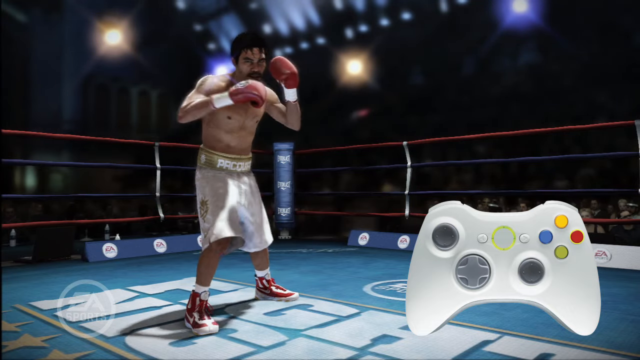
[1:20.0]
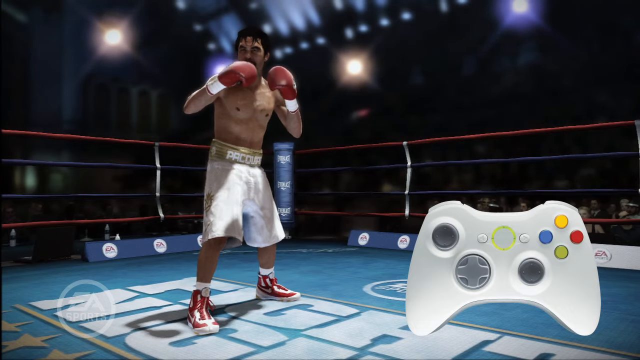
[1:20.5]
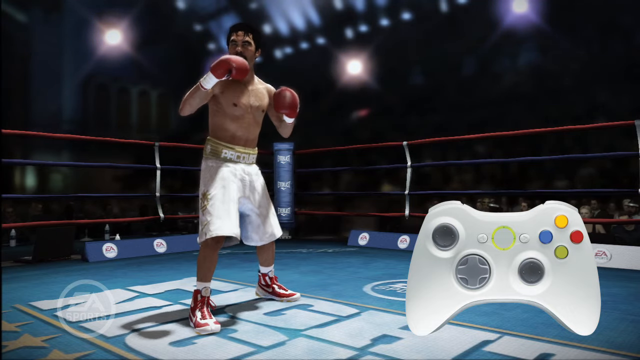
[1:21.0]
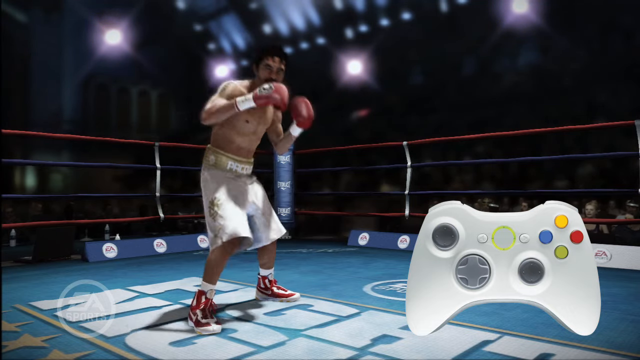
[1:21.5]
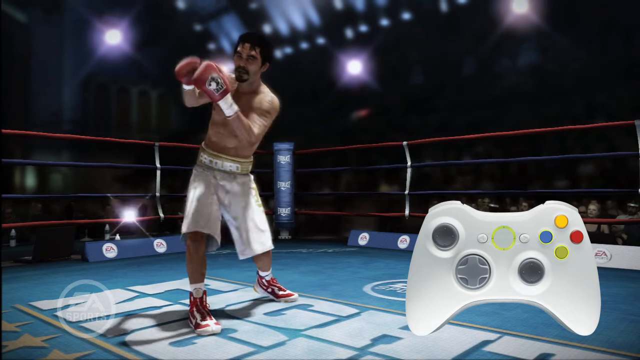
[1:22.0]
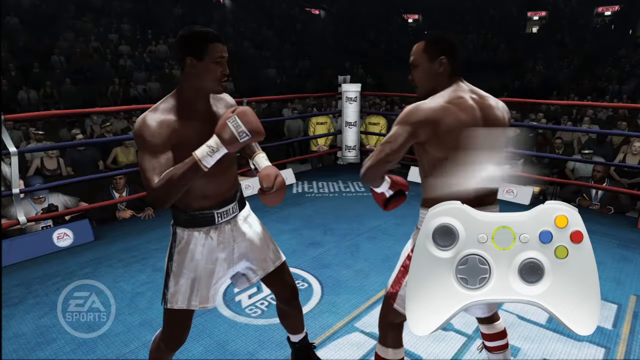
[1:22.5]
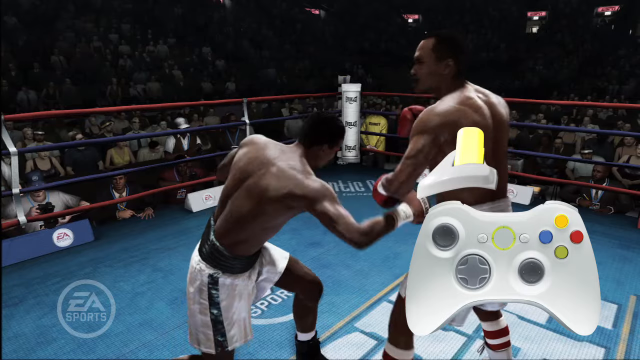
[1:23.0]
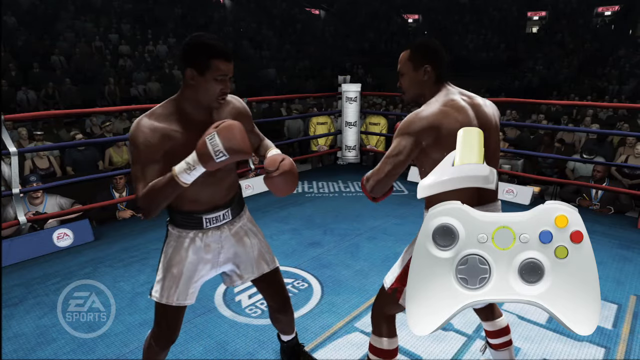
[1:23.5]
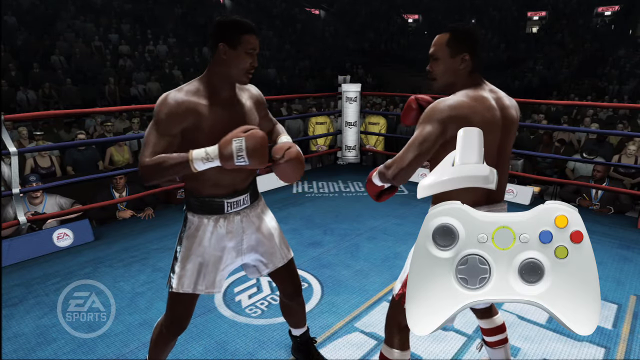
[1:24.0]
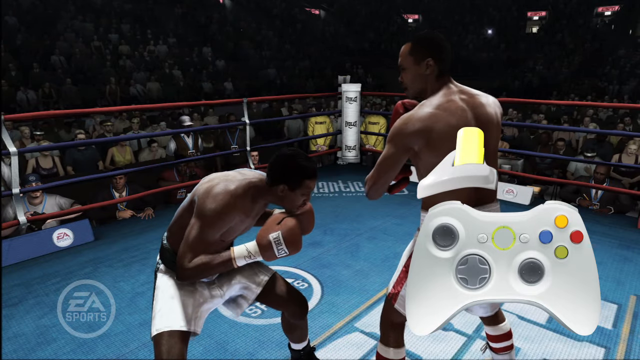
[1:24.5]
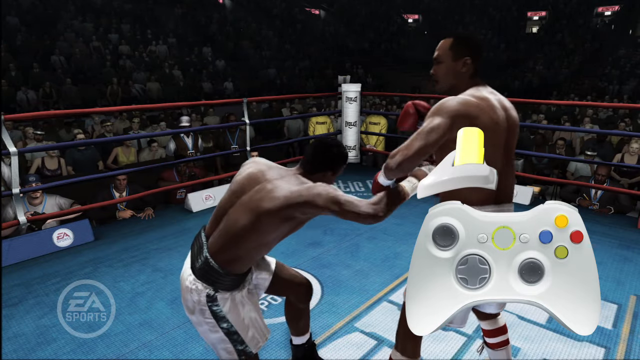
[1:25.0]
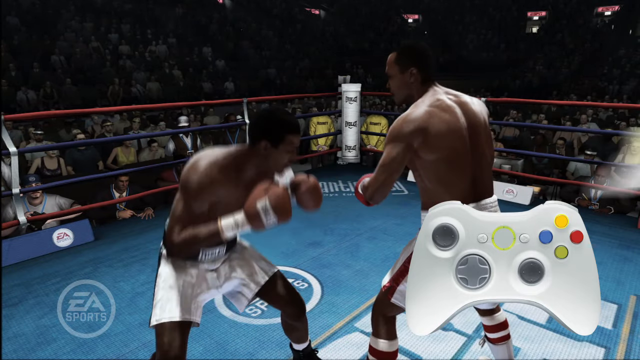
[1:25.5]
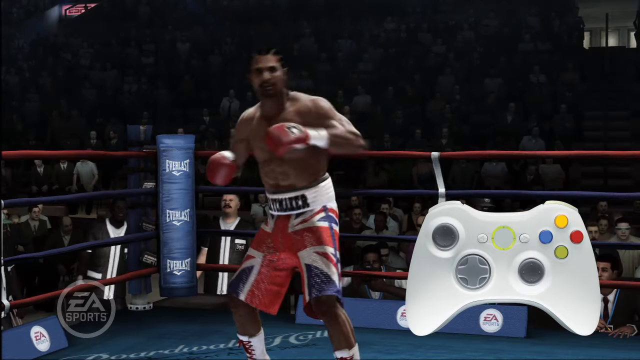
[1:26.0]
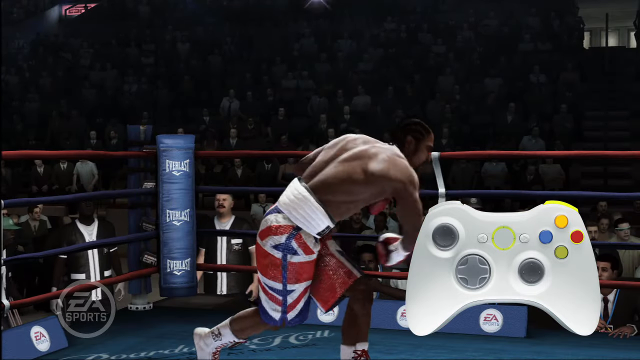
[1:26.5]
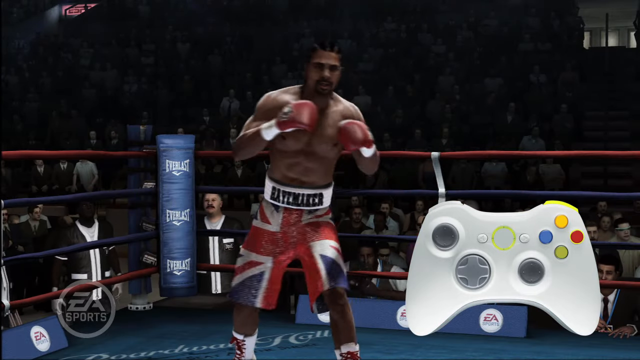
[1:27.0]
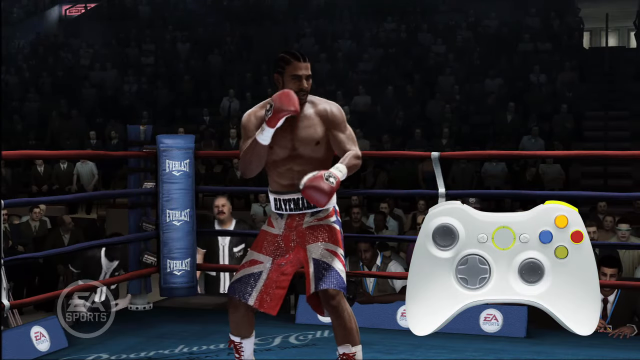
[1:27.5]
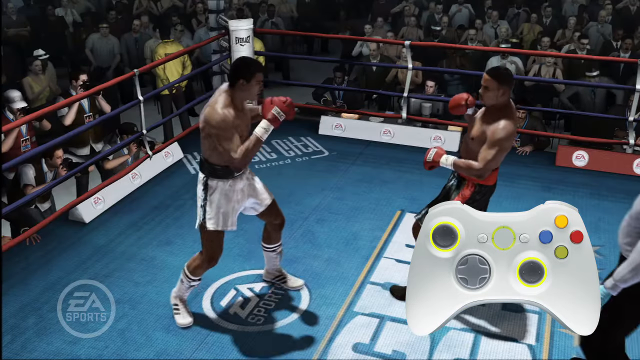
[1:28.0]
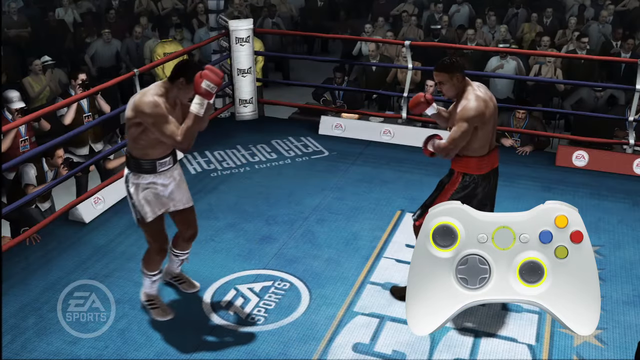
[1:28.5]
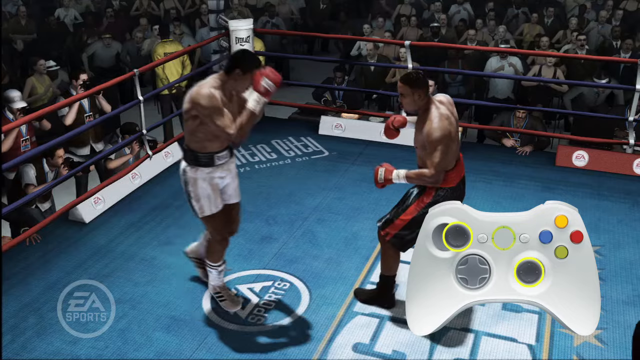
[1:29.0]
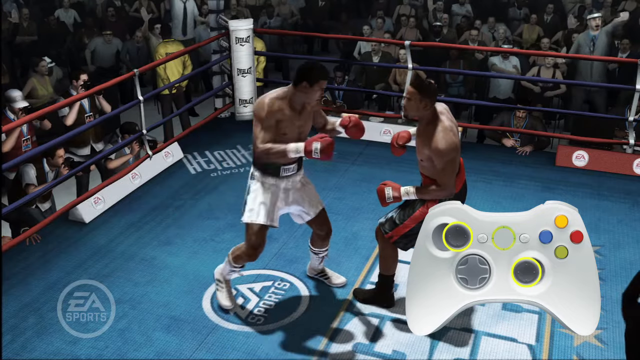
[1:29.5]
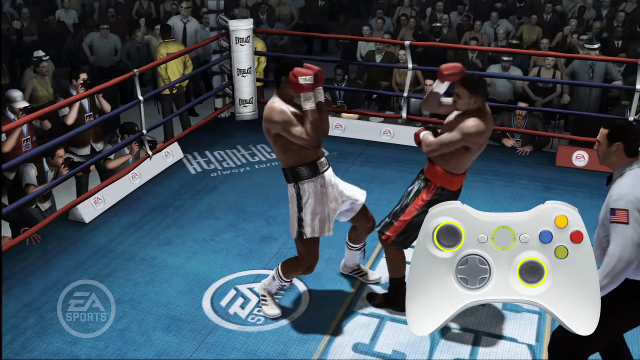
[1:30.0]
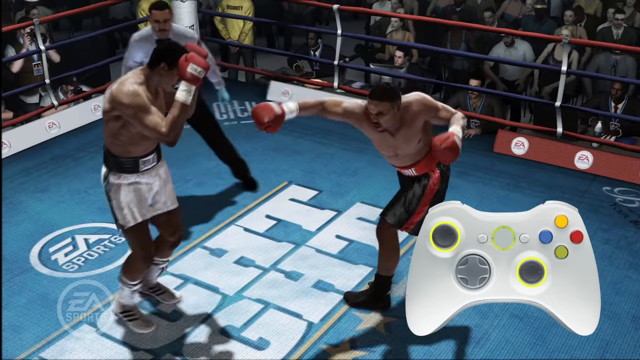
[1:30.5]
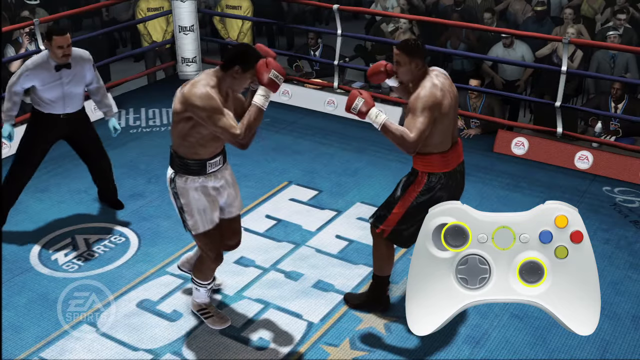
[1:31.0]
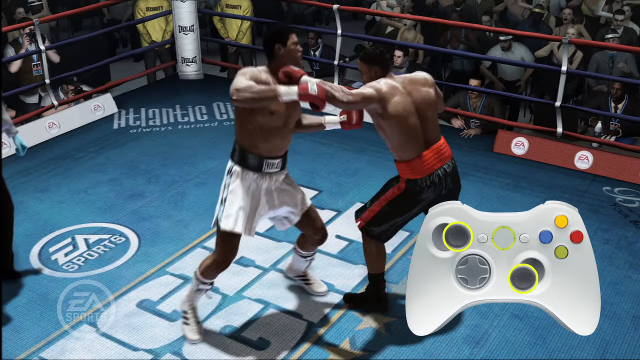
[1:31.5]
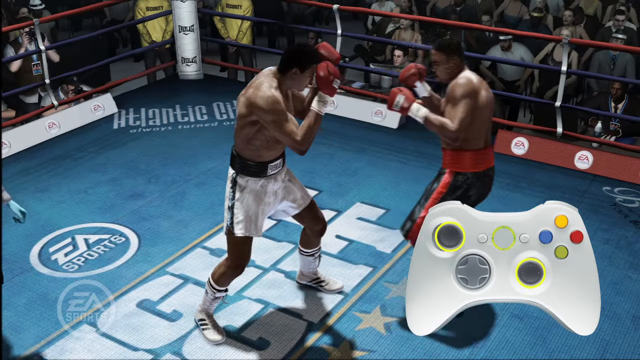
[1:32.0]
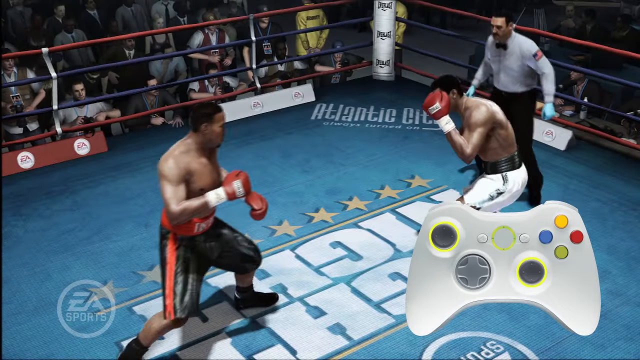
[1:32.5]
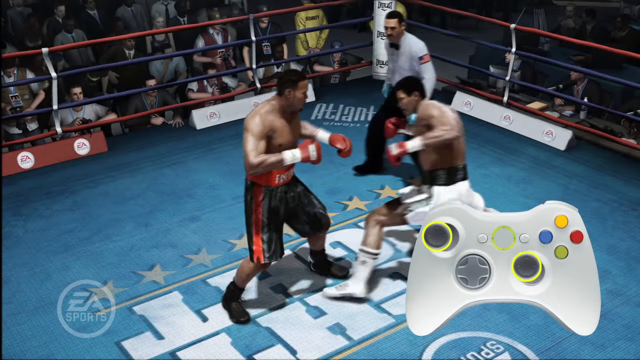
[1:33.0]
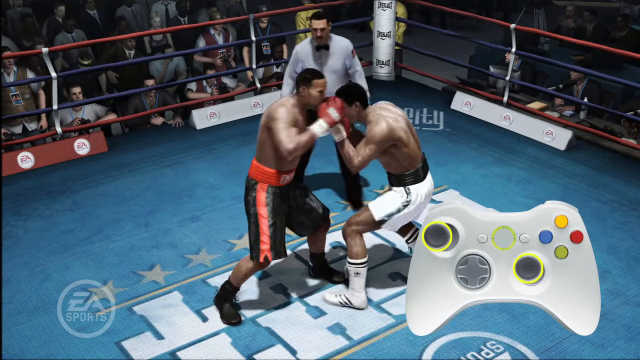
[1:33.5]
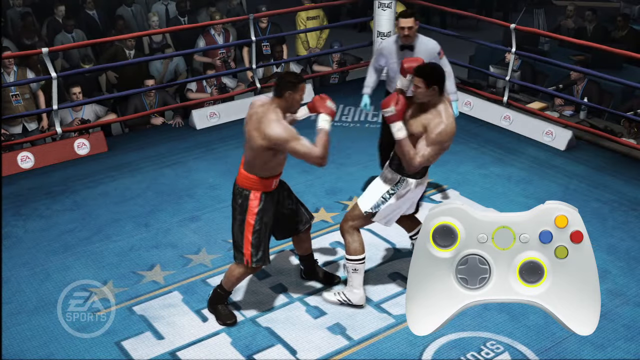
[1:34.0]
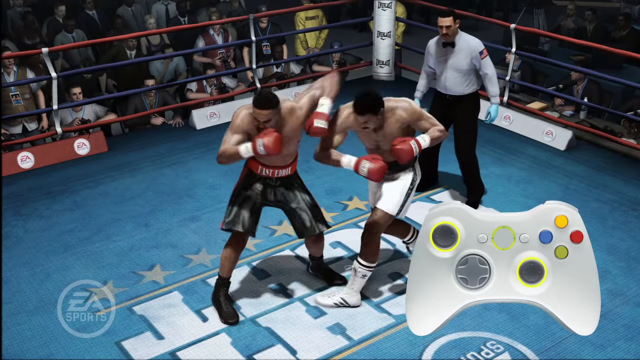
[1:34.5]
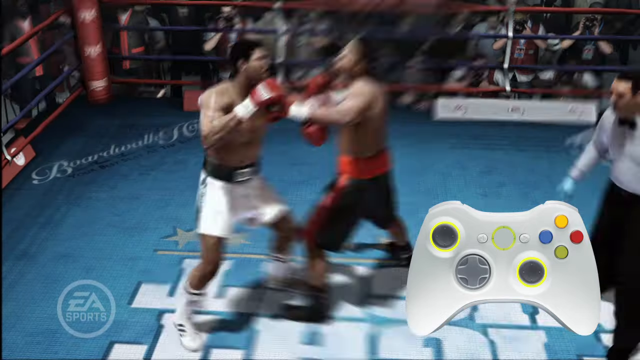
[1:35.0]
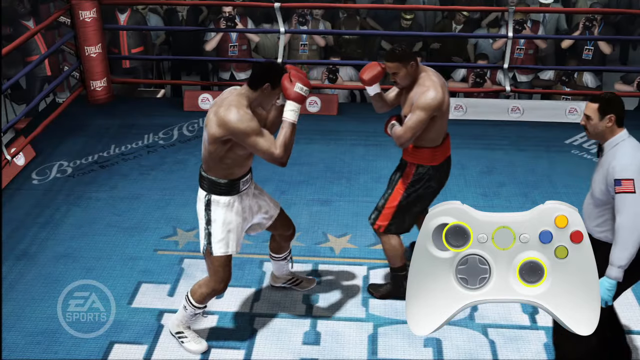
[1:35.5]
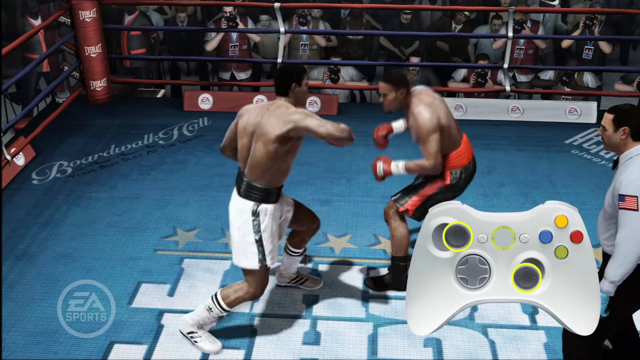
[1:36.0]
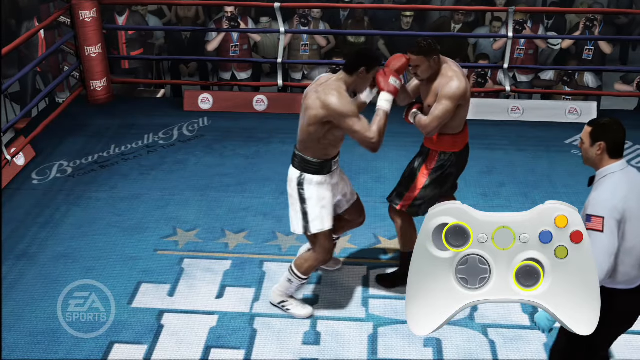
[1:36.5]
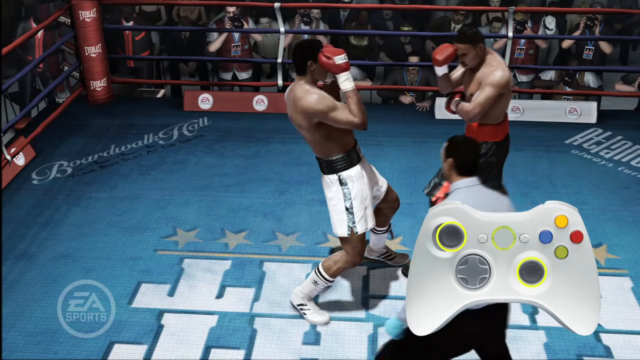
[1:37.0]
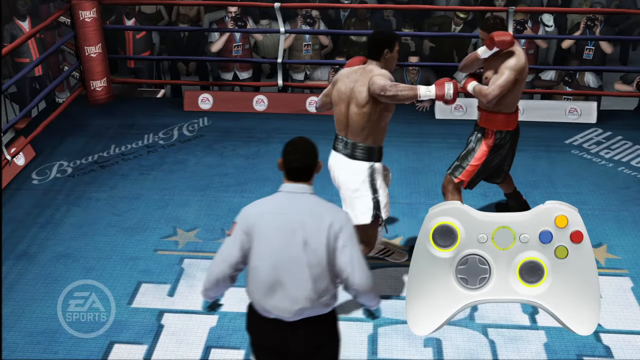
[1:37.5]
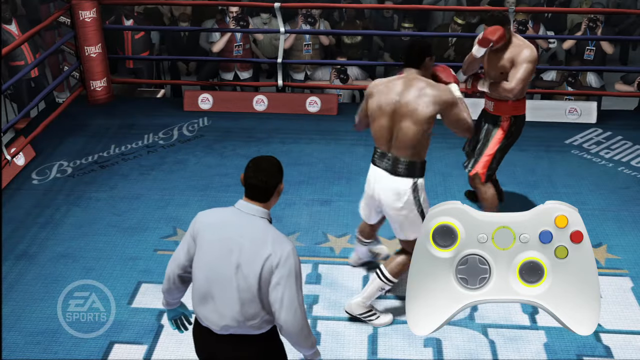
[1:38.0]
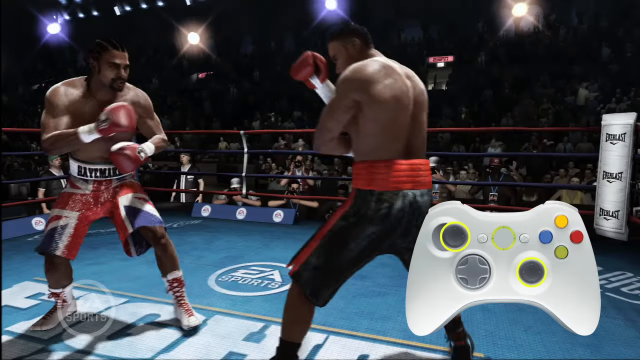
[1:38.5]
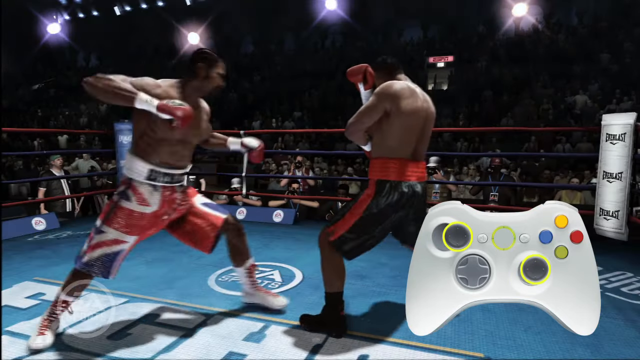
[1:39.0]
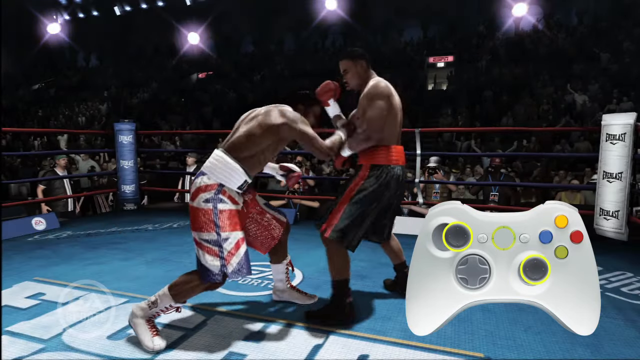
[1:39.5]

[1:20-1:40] The man in red and white shoes continues to punch. The view then goes to two other players fighting each other, both black men: one has a black waistband, white shorts and red and white gloves, while the other's lower half is hidden by the controller image. Again the joystick shows which way to make the moves, and the trigger is displayed over the controller. A close-up follows of the man in the British pants throwing punches in relation to the controller. The view returns to the two players: the one with the black waistband, white shorts and red gloves, and the other, previously hidden by the controller, who now appears to show black shoes, red and black pants and red and white gloves. The video cycles through different viewpoints of their fight while showing the moves on the controller.